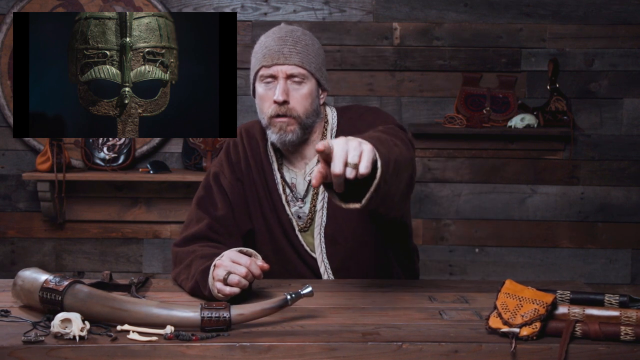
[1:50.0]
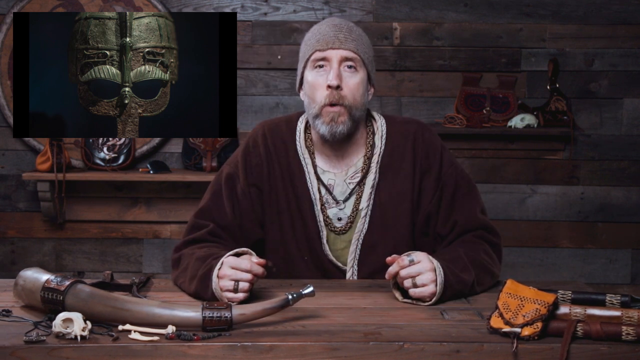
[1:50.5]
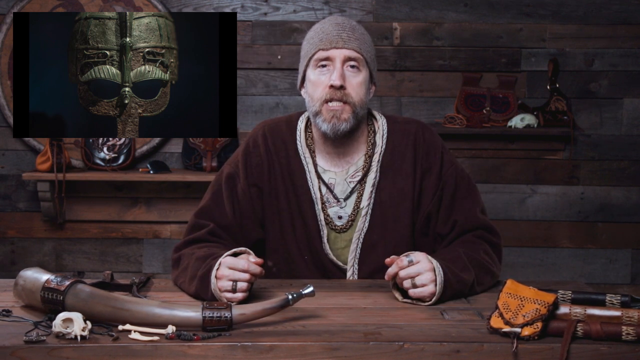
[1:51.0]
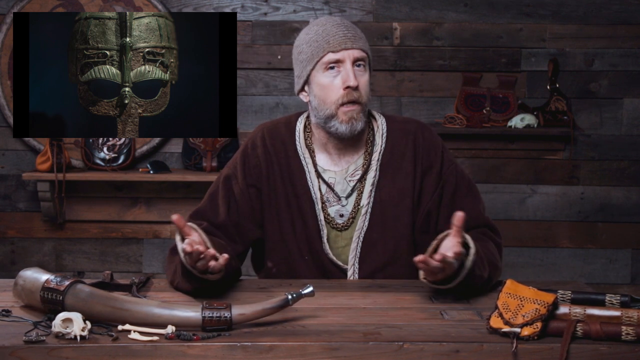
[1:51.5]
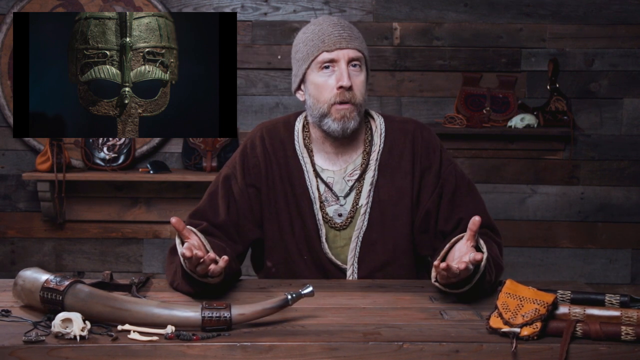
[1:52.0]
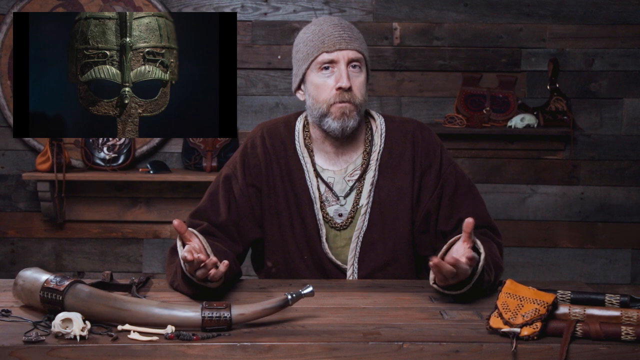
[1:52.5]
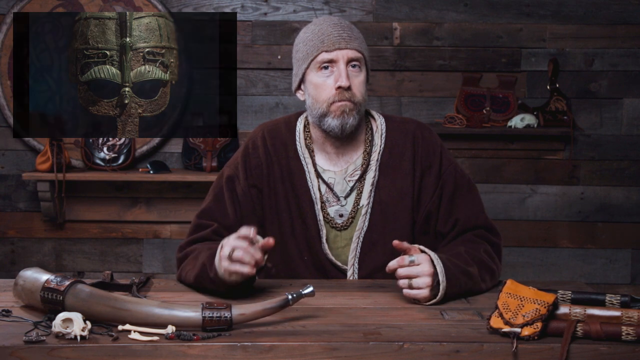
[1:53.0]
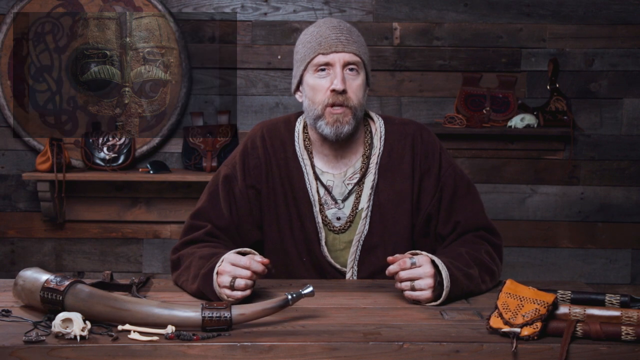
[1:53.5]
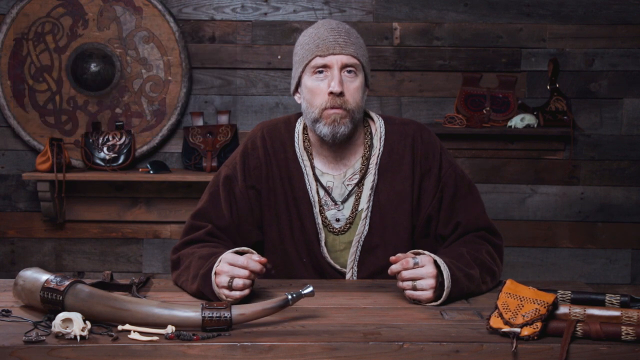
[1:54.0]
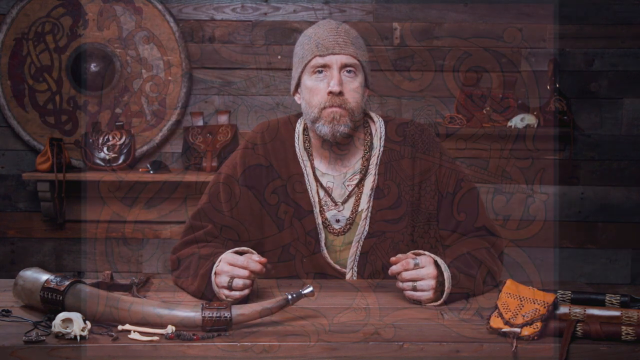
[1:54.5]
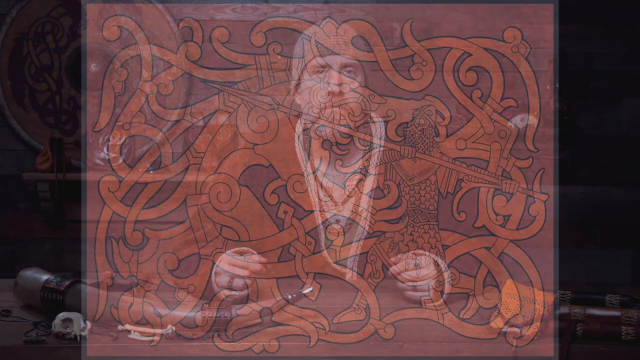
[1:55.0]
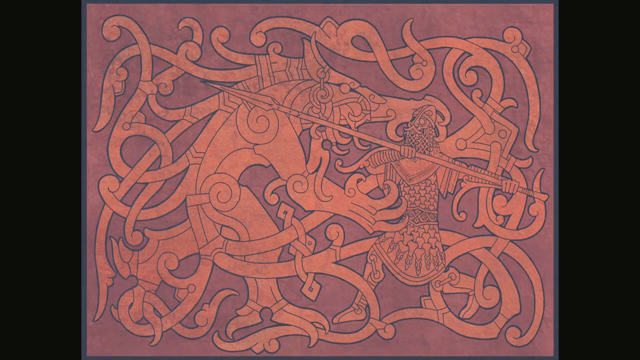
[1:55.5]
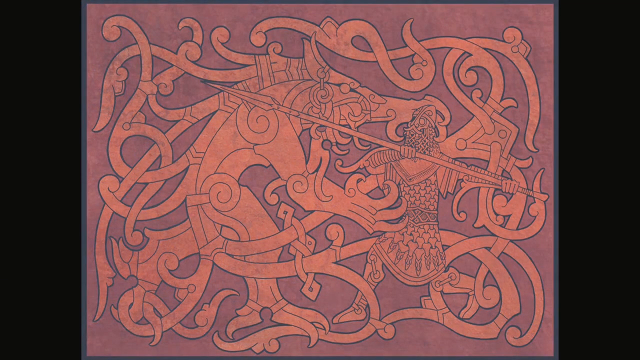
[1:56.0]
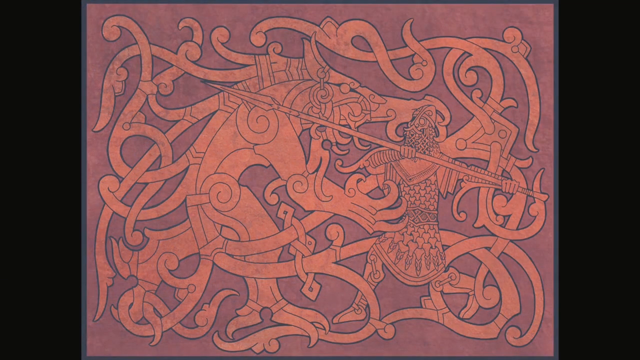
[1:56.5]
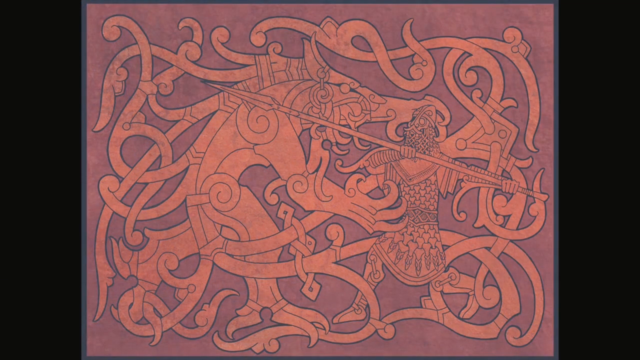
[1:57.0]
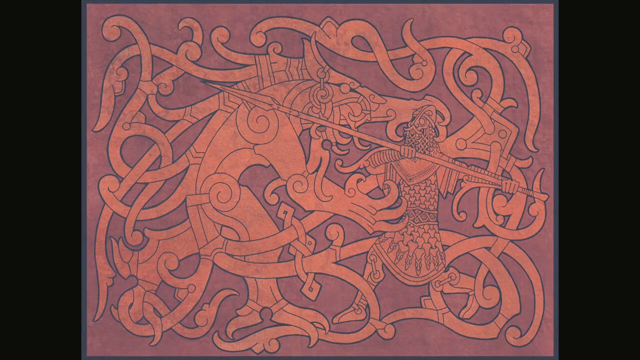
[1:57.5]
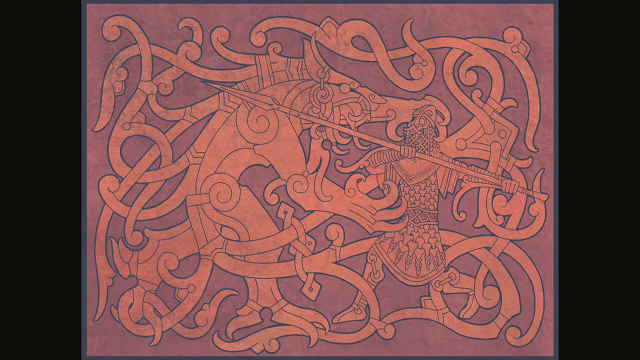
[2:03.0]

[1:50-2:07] A man sits behind a desk, looking straight at the camera, in what is sort of a cabin. The wall behind him is made of planks of wood, and the wooden desk is of similar colours. On the desk to the left are historical cultural items, including what looks like an old horn; to the right is a small orange bag. There are two shelves behind him, one on the left and one on the right, the right one higher, with some bags of sort of a historical European nature, maybe northern Europe. The man wears a brown greyish beanie, a maroon robe, an elaborate necklace and rings on his fingers, and has a greyish beard that is not too fluffy. He points right at the camera with his left hand, arm outstretched. In the top left of the screen is an image, not actually in the room, of a helmet or mask made of metal that seems to be a few centuries old. The video then cuts to the man talking to the camera, elbows on the table, making slight motions with his hands. The helmet image in the top left then disappears, and what is almost like an orange and red shield can be seen up in the top left, sitting on the shelf. The video then fades away from the man to a picture of a drawing of a knight fighting a dragon, in an elaborate lattice pattern in red and orange. The knight uses a large lance to fight the dragon. The camera is a little shaky on this image.